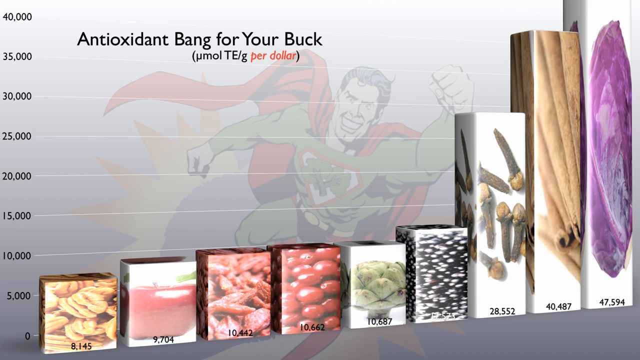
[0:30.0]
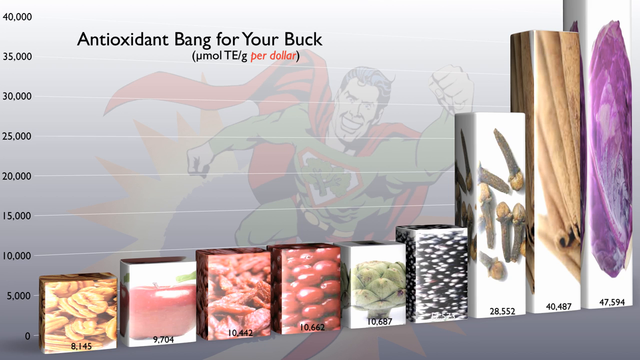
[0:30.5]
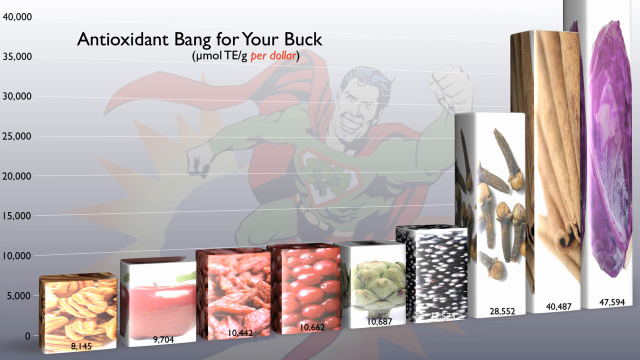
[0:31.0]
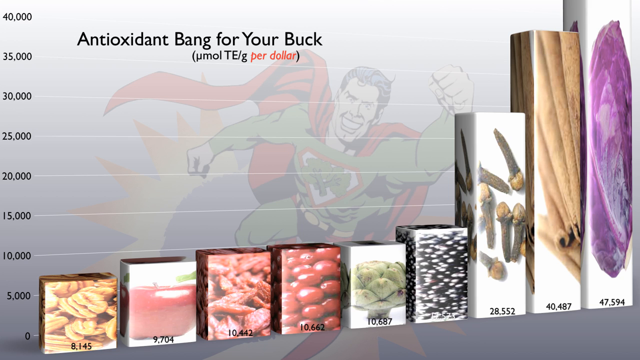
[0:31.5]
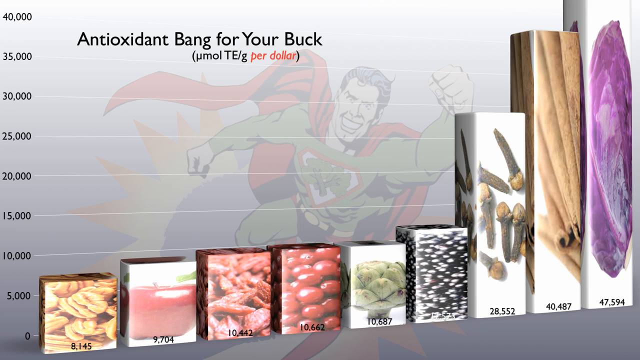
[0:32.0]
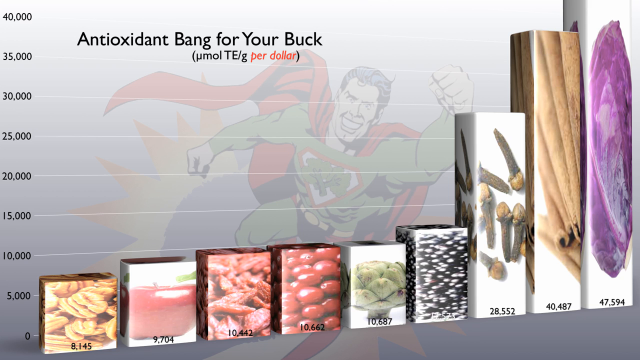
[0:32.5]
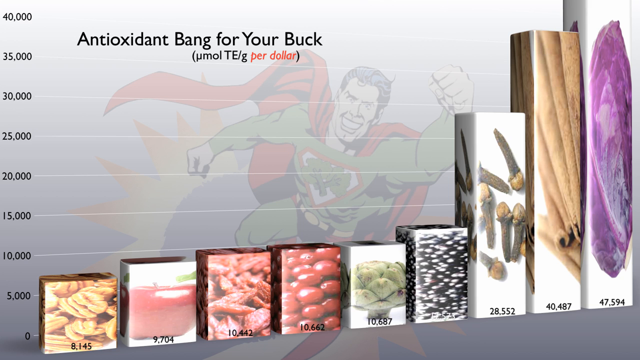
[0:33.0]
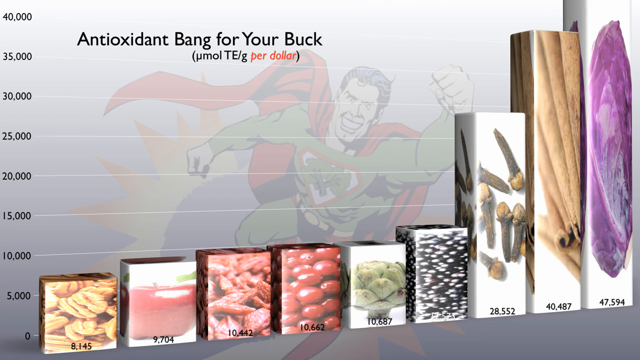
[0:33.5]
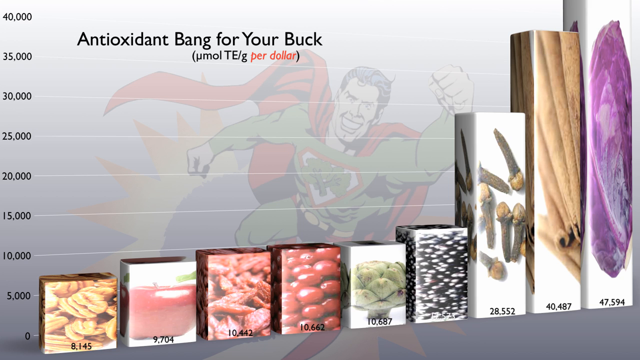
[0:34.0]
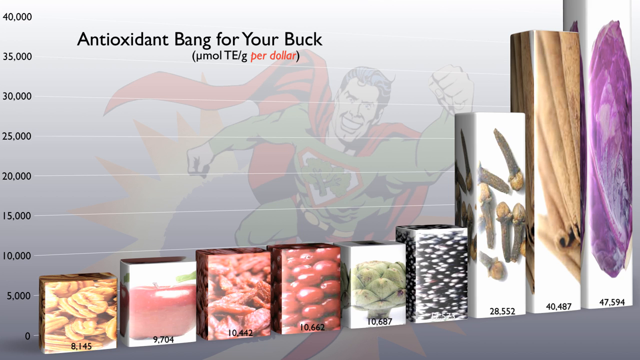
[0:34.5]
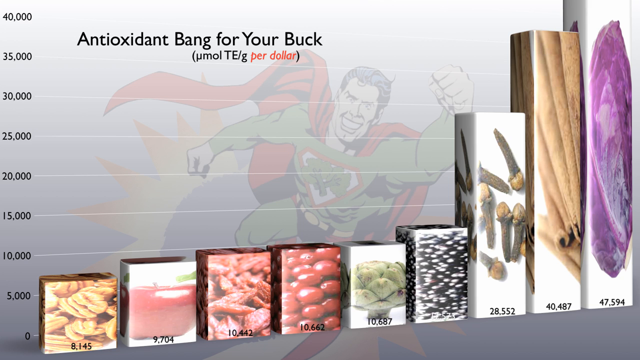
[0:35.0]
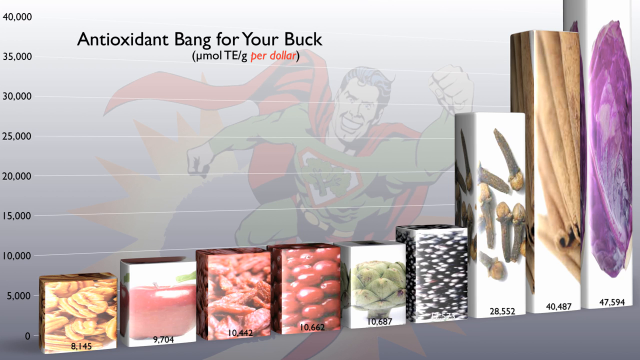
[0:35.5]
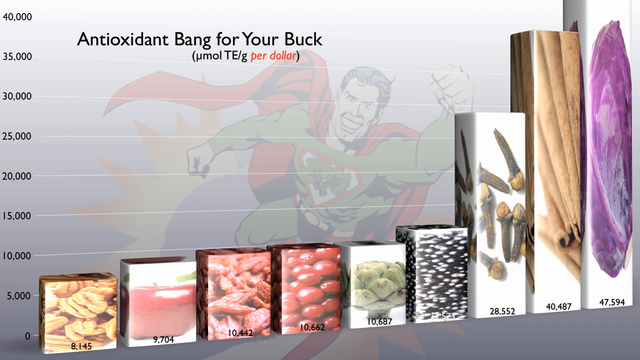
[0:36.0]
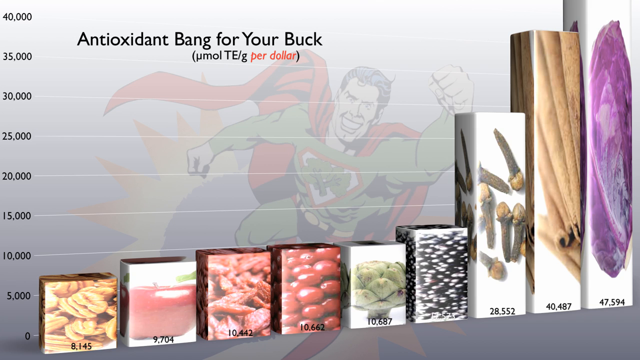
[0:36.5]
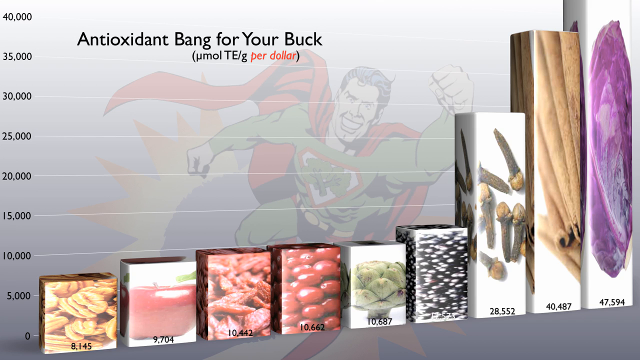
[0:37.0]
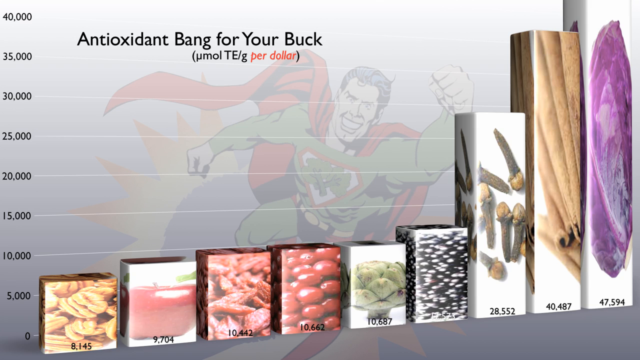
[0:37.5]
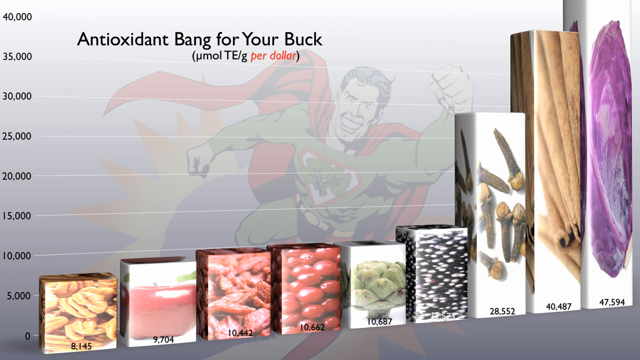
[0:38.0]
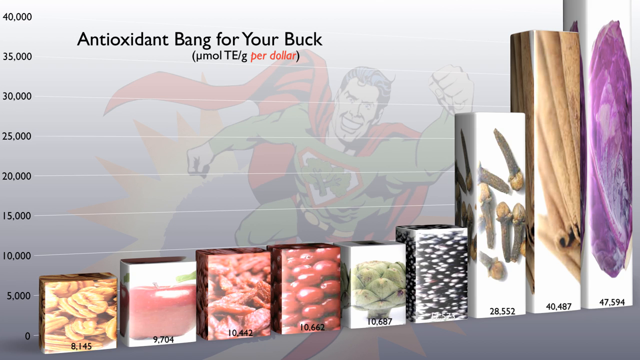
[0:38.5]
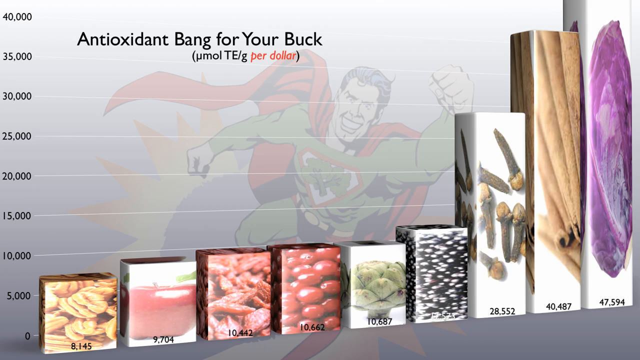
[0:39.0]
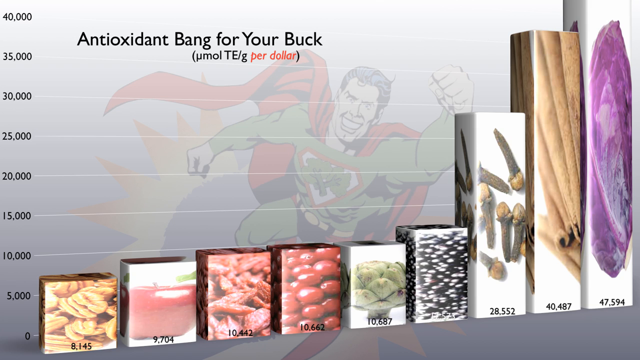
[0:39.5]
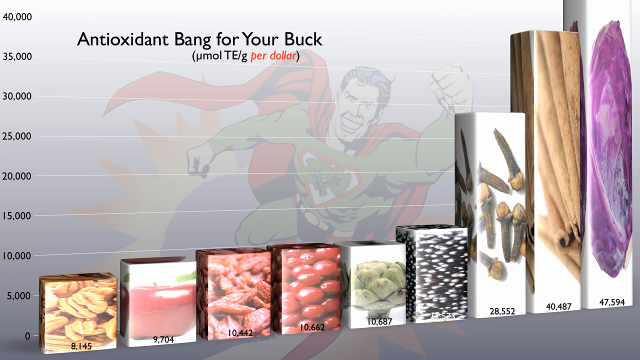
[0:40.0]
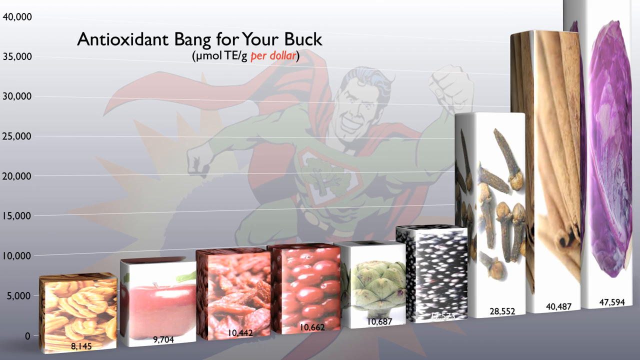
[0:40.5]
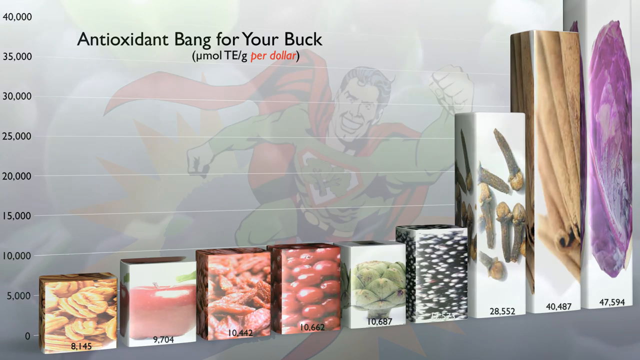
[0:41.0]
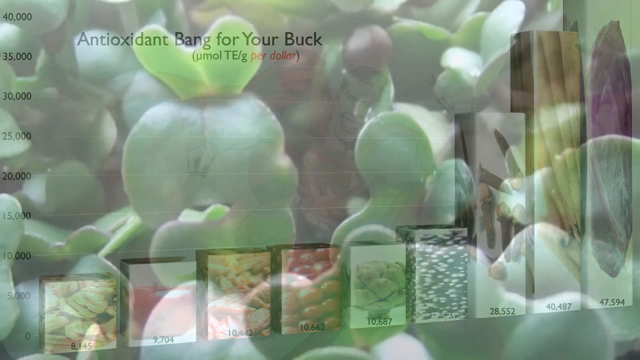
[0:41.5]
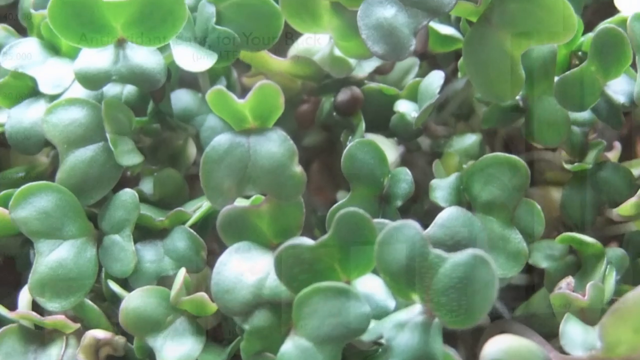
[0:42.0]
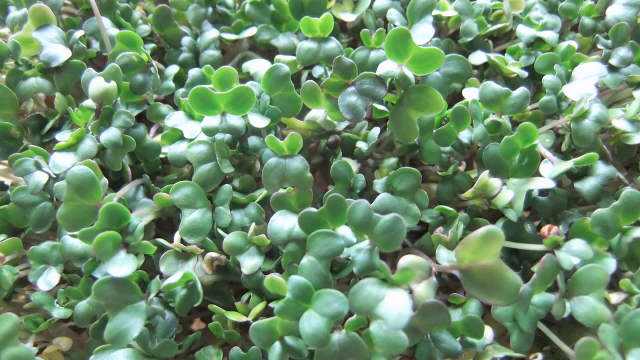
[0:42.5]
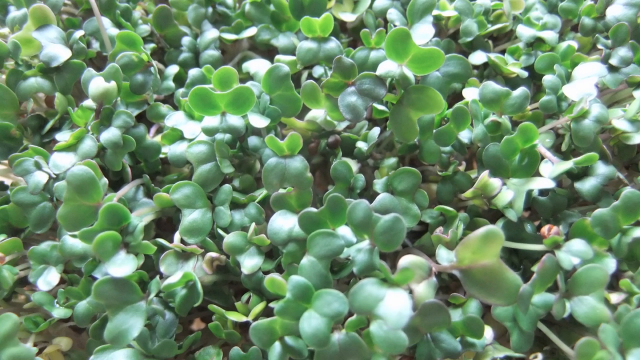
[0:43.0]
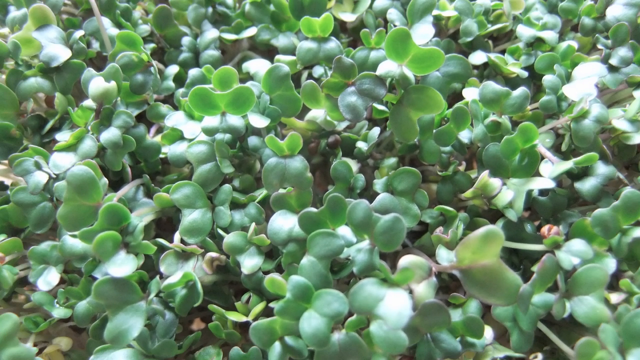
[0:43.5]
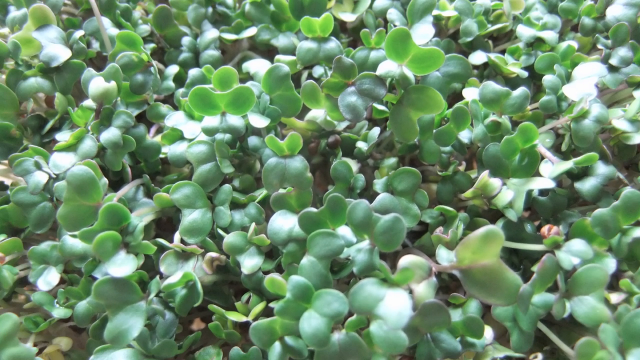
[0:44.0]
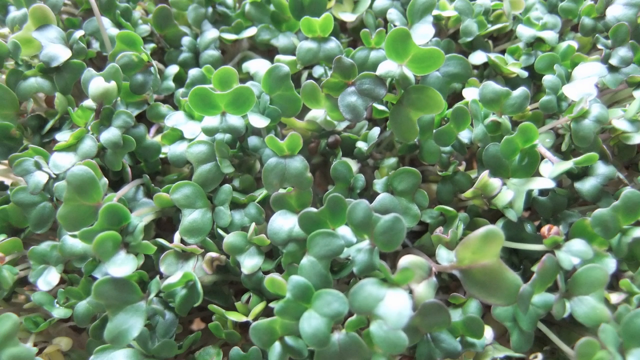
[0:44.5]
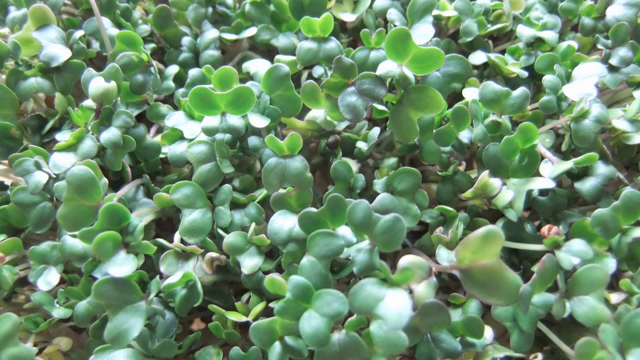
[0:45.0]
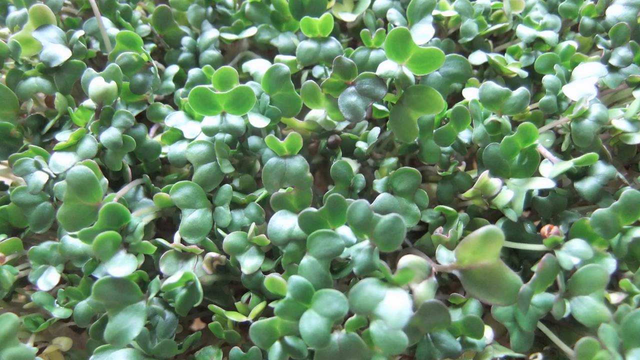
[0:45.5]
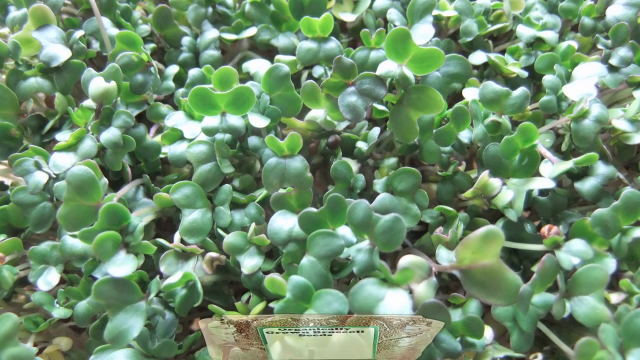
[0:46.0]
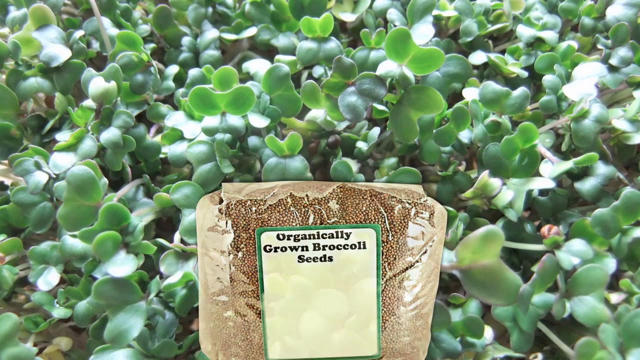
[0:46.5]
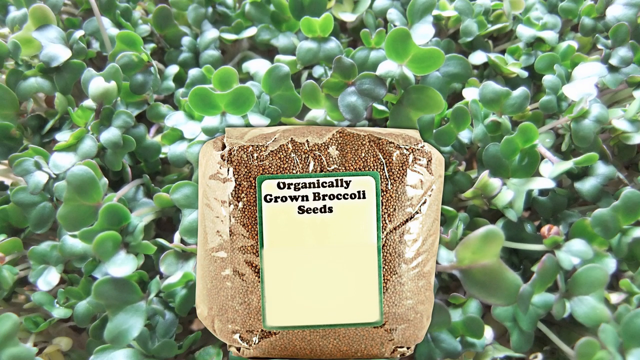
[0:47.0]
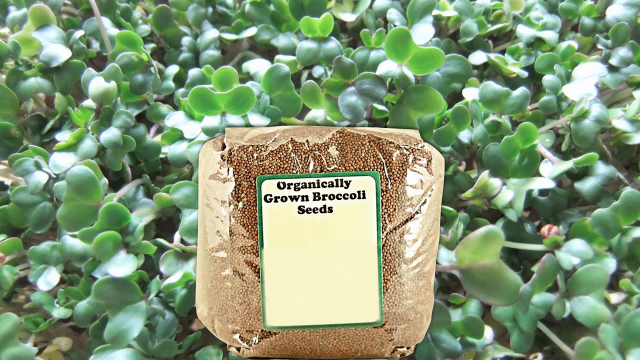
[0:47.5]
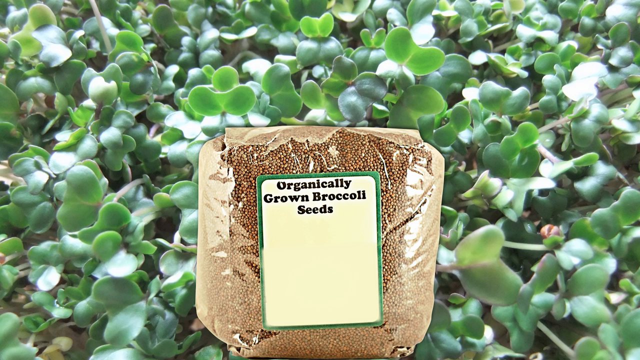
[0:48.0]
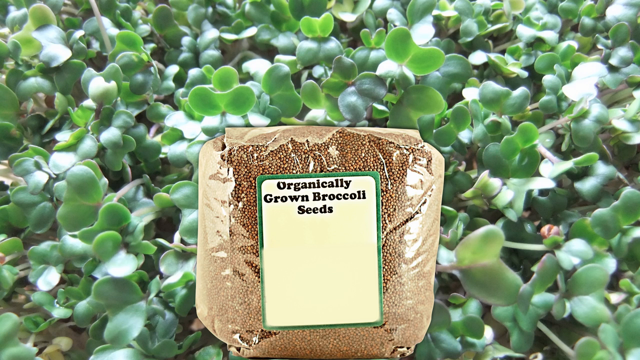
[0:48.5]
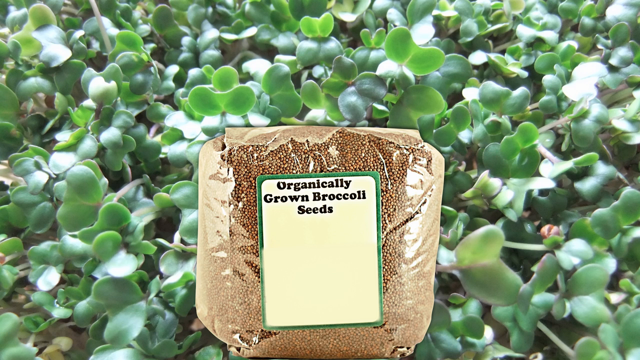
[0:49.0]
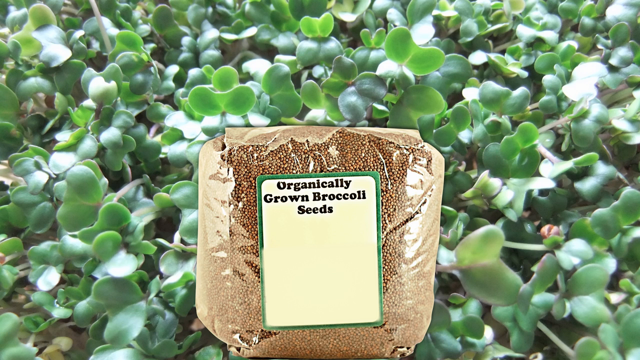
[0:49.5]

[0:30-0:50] Information is presented in graphics, with the strong-looking cartoon still in the background, shown in different colours, green on the hands and red, and it looks like it is flying. On the far left, numbers run from top to bottom: 10,000, 15,000, 20,000, 25,000, 30,000, 35,000 and 40,000. The information is shown as a bar graph: the bars start small, mostly below 10,000, and grow to at least 15,000. Three big bars stand on the far right, the biggest at the far right, followed by a shorter one and then a shorter one still. The bars come in different colours, very colourful, looking like things used to store food. The video then zooms into a green background of very fresh-looking green plants, and in one square appear text and a bag of brown seeds labelled "organically grown broccoli seeds."